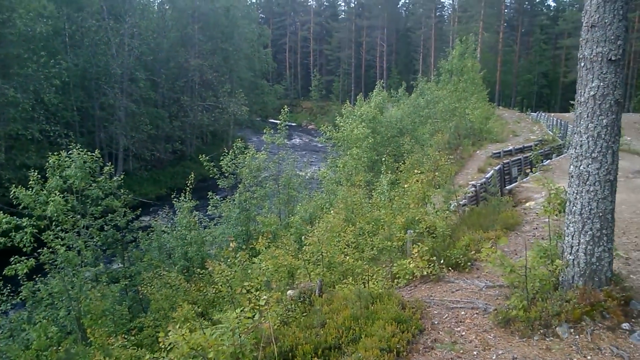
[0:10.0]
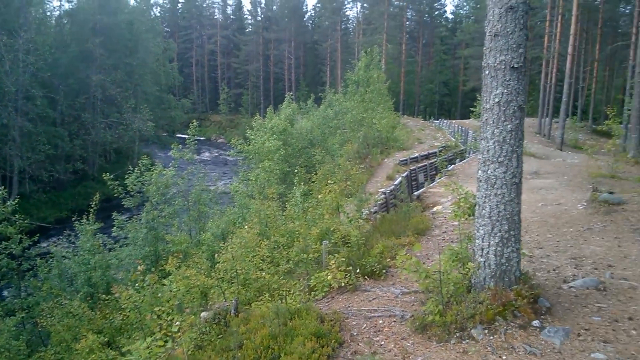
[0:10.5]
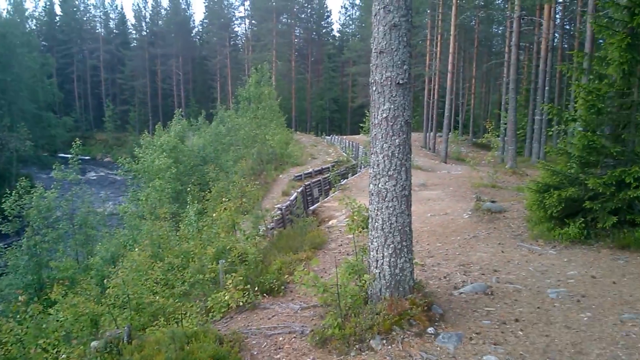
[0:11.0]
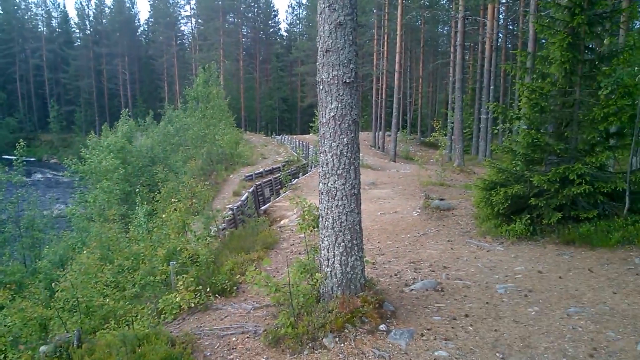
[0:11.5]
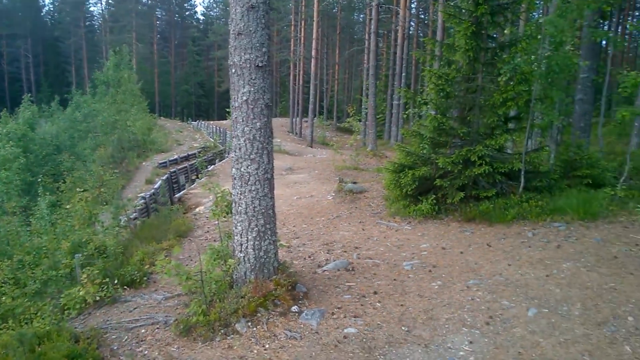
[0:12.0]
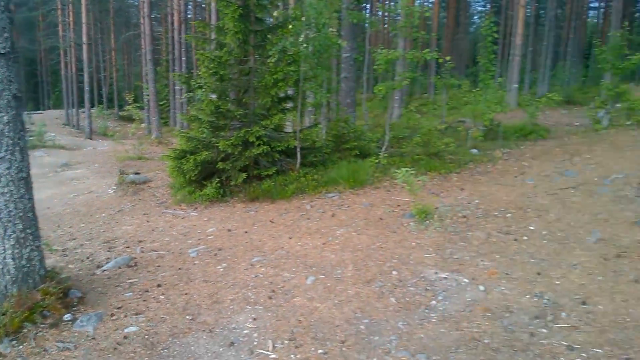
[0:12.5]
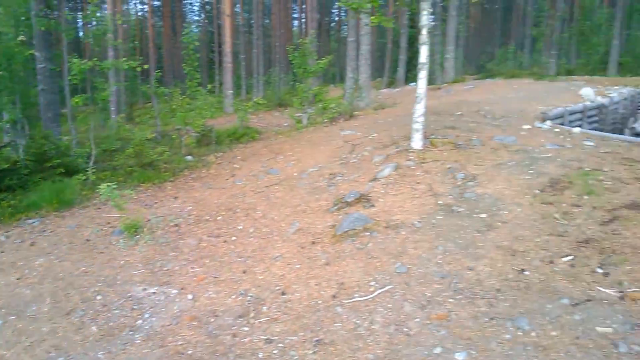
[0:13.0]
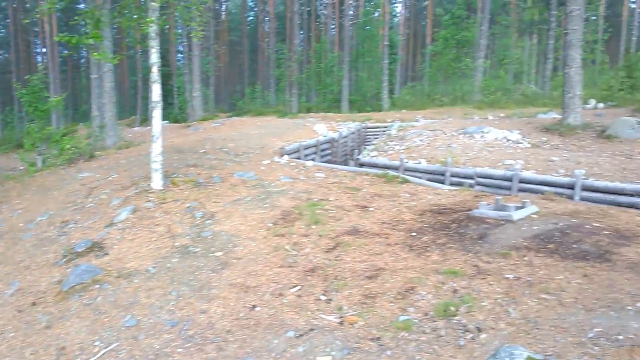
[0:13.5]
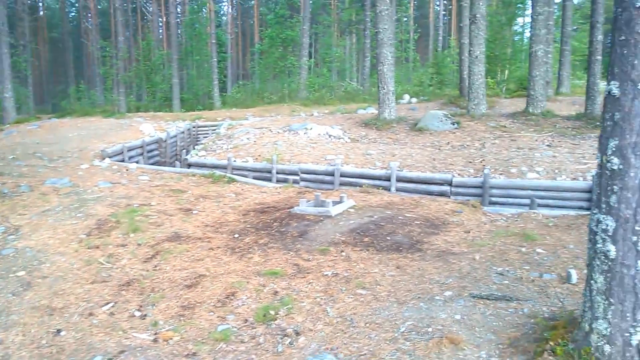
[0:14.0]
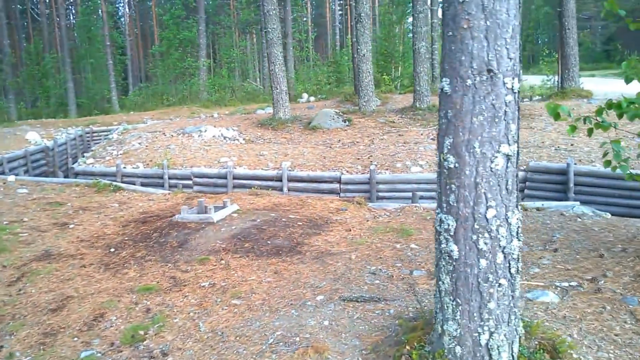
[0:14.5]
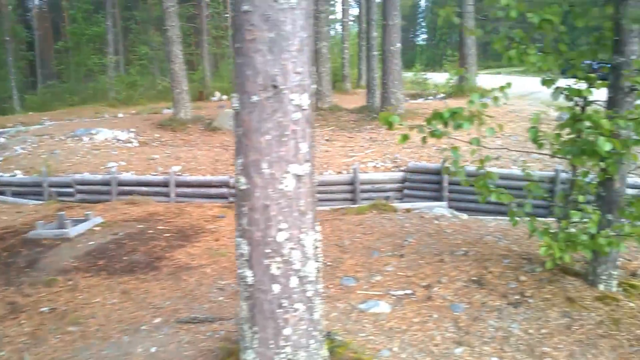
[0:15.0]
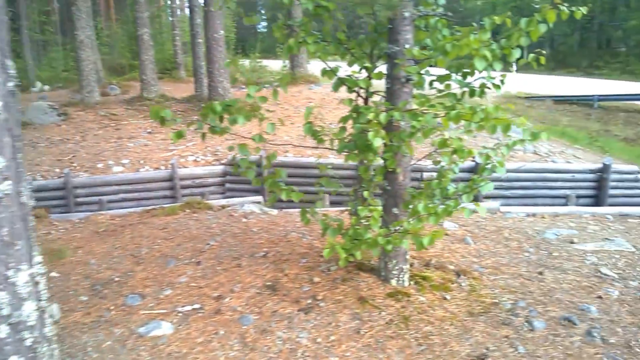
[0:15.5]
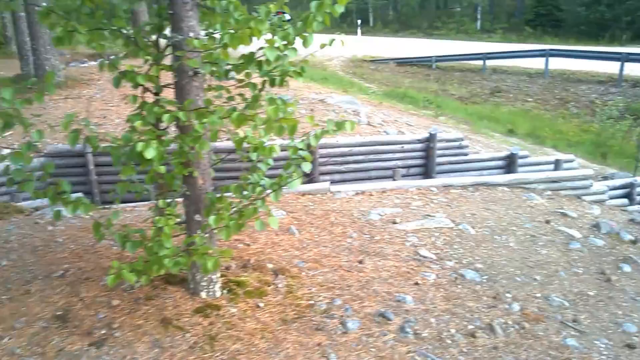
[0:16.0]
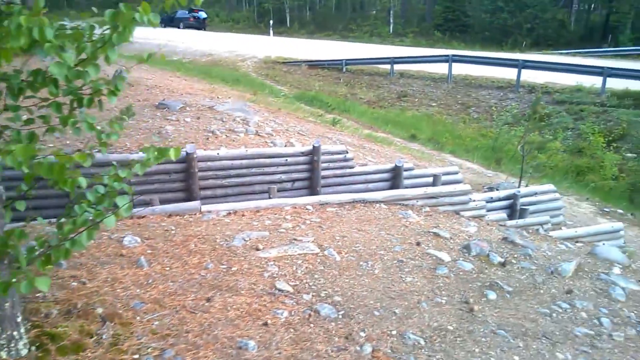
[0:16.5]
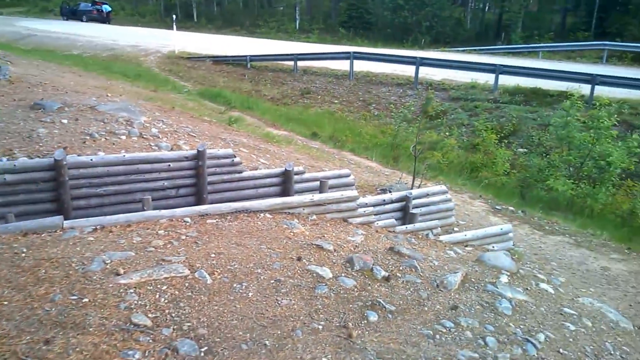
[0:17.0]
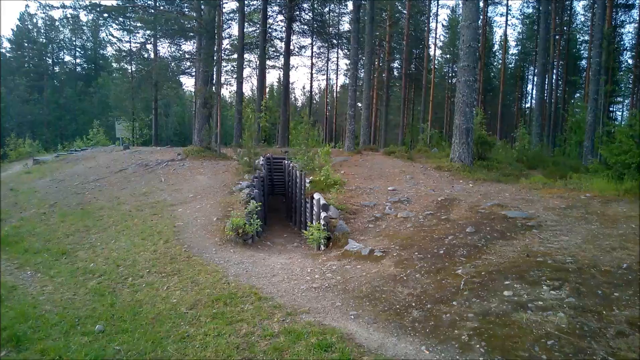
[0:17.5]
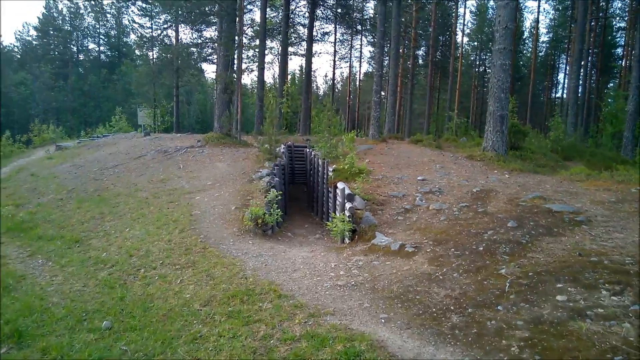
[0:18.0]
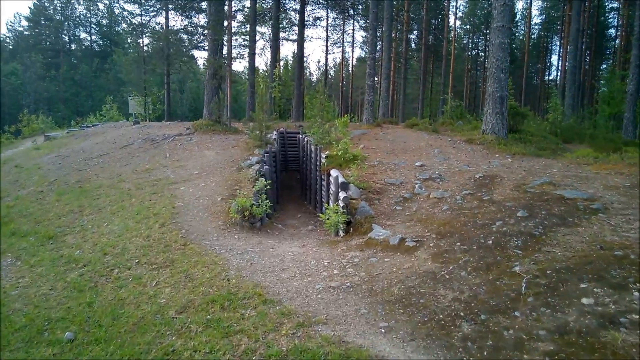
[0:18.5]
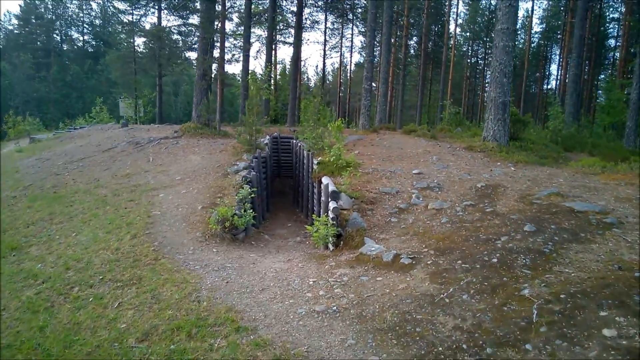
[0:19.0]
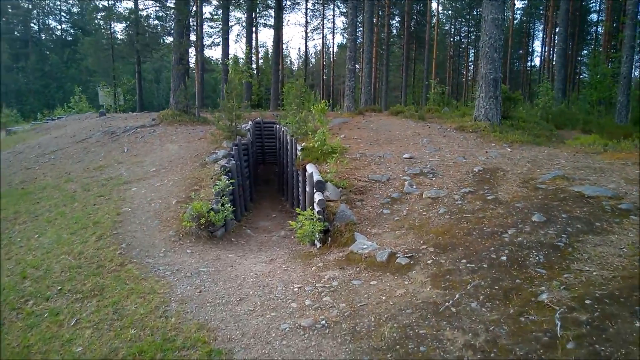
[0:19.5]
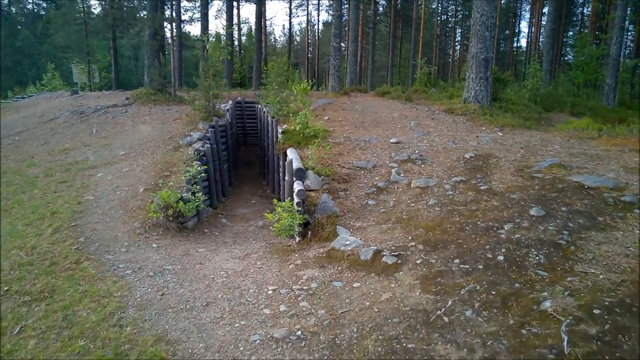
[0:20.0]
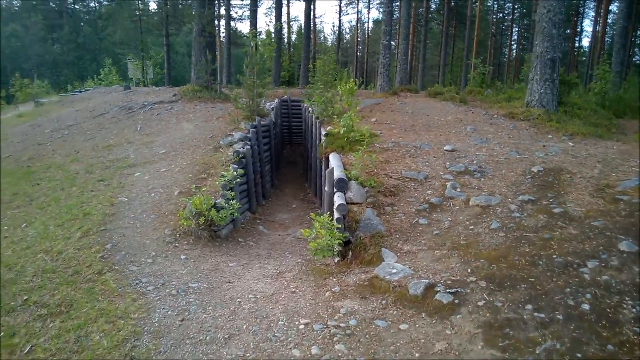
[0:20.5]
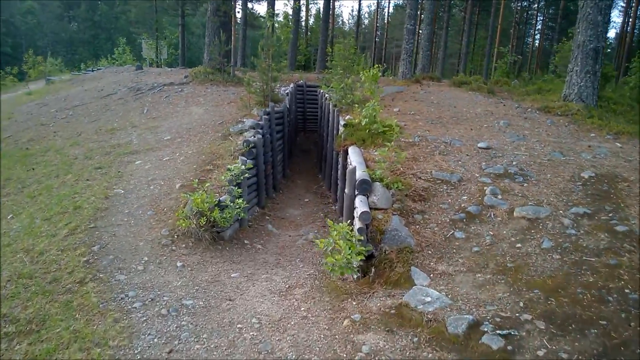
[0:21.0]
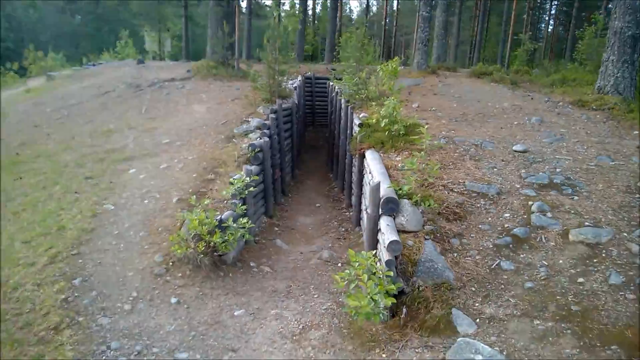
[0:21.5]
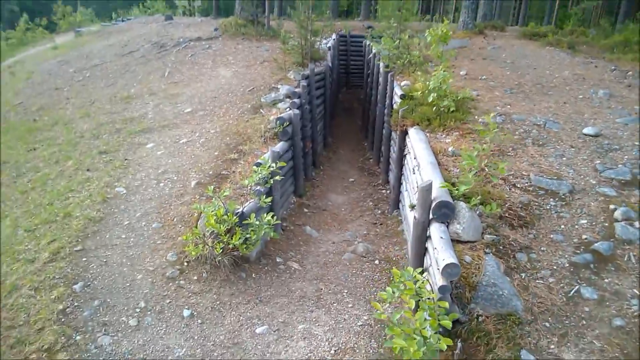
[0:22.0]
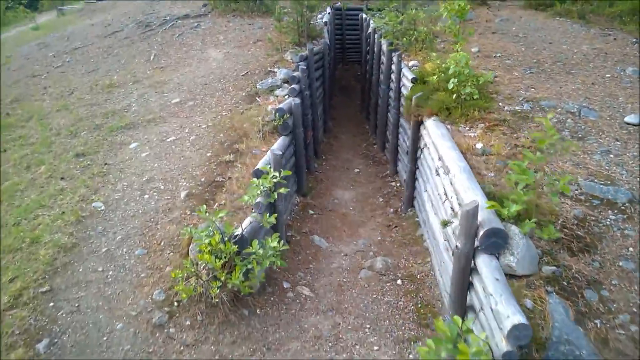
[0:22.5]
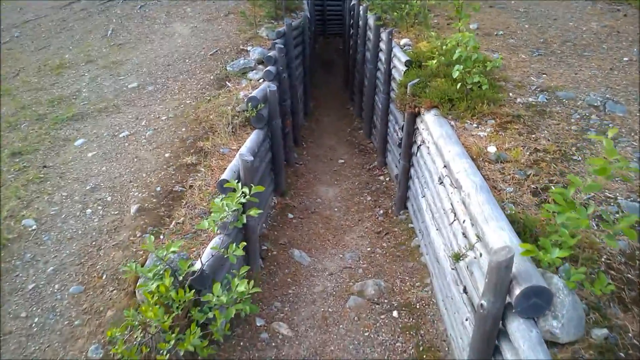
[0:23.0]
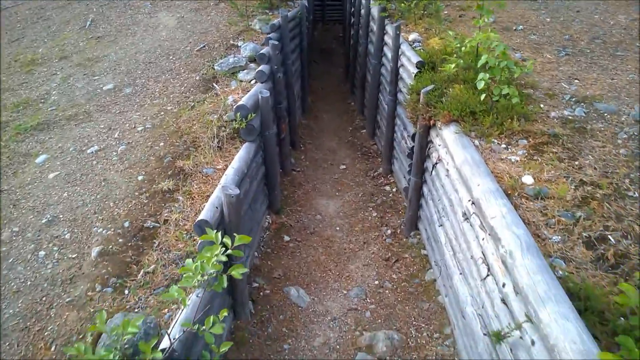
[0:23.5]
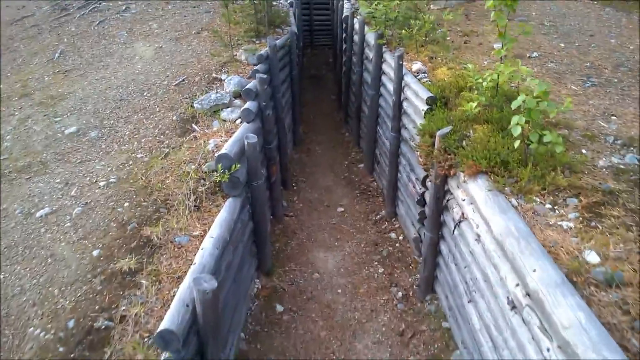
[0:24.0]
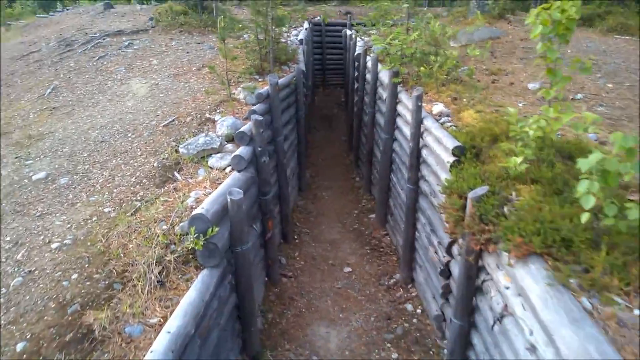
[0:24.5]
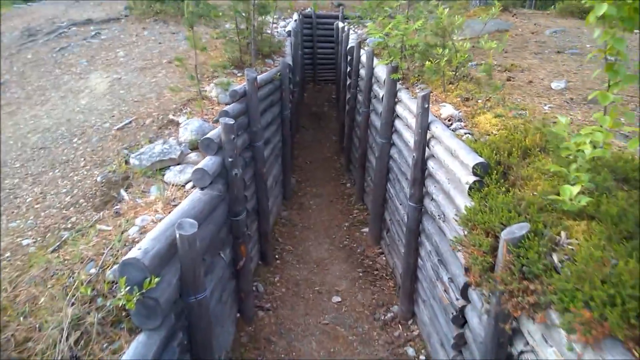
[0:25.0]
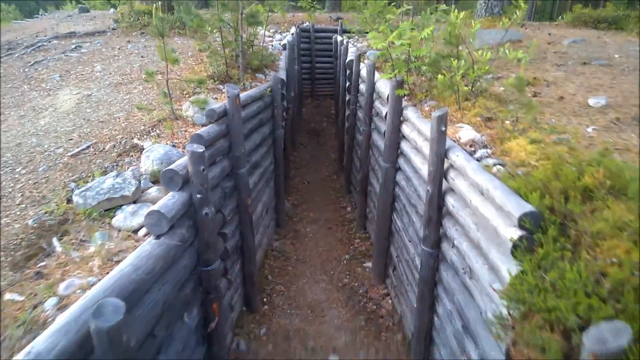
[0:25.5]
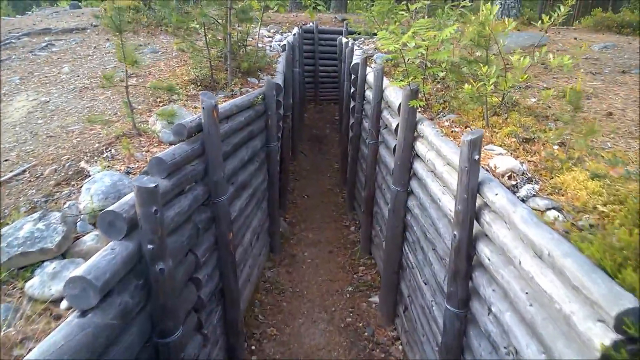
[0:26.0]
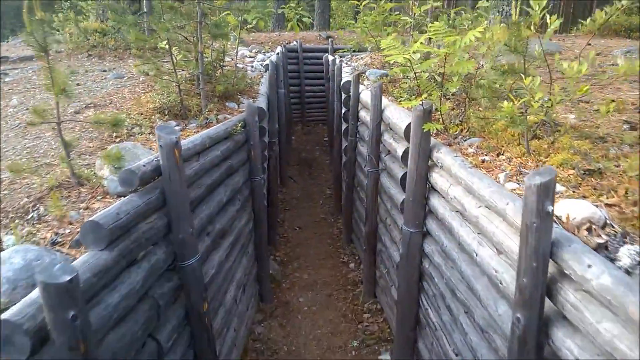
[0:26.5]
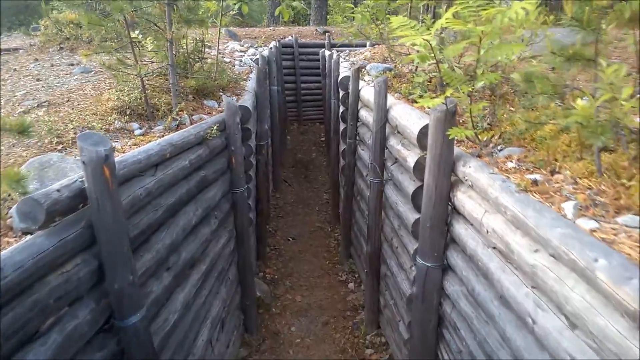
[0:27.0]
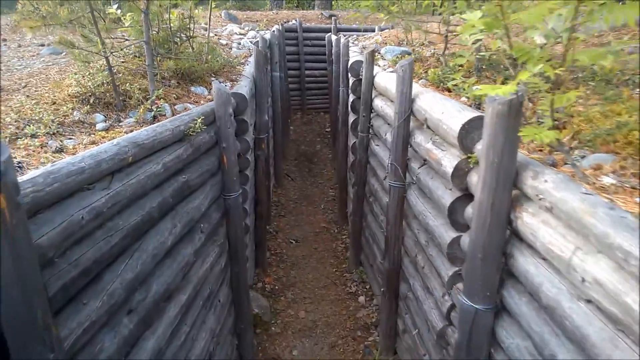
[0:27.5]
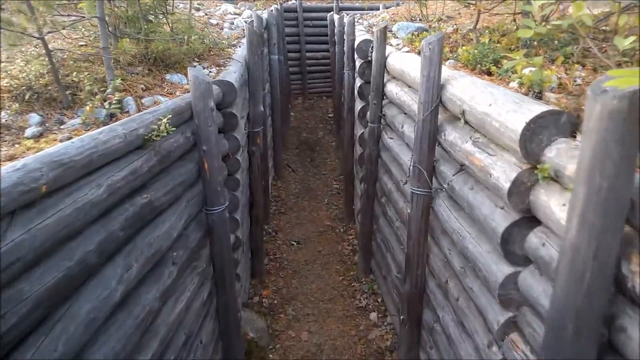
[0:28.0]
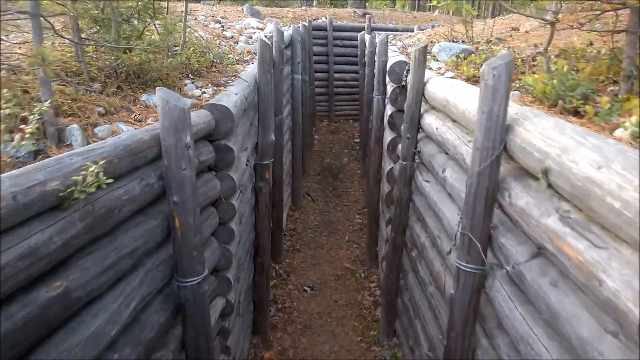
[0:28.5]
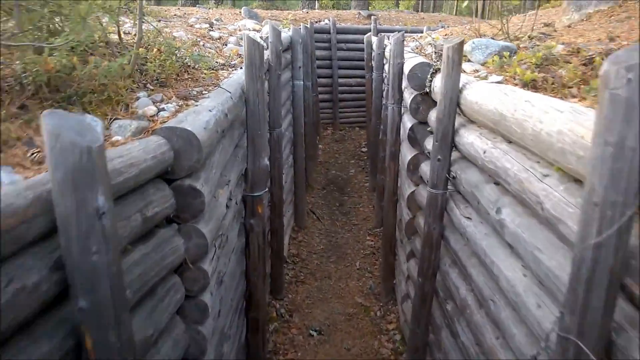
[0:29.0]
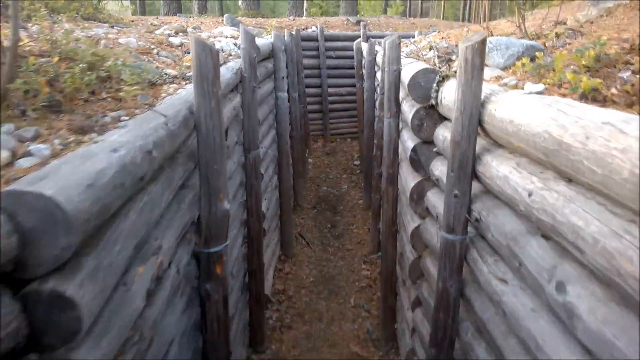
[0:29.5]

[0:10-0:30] The camera pans away from the sign to show more of the outdoor area. There appears to be a river, along with greenery such as shrubs, but mostly trees; the large number of trees suggests a heavily forested area. A trench line dug into the ground is shown, reinforced with what appear to possibly be logs. The video cuts to a new perspective of the trench as the person recording moves into it. The trench appears to be about the height of an average man.